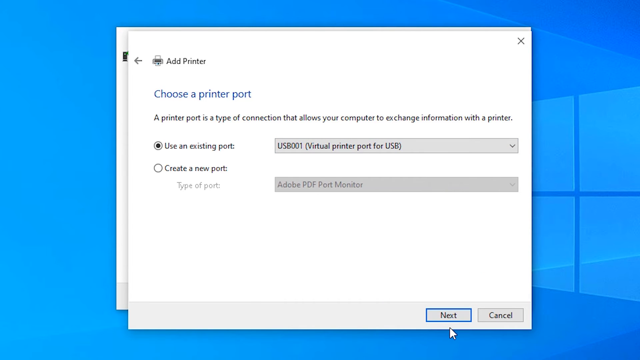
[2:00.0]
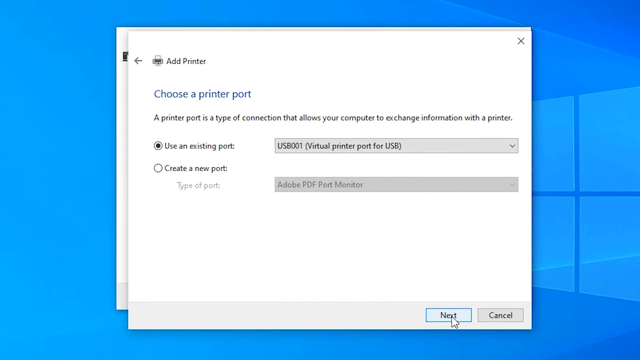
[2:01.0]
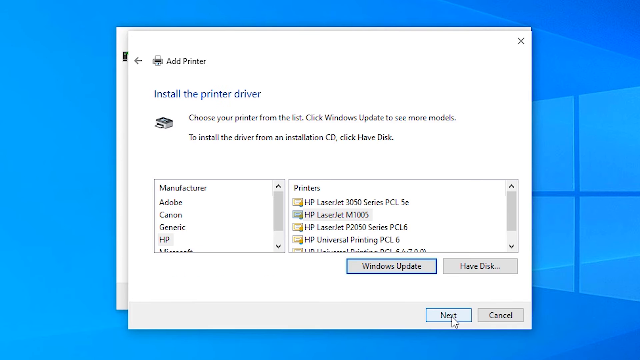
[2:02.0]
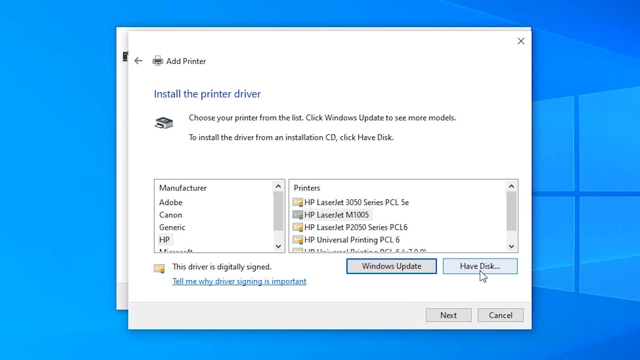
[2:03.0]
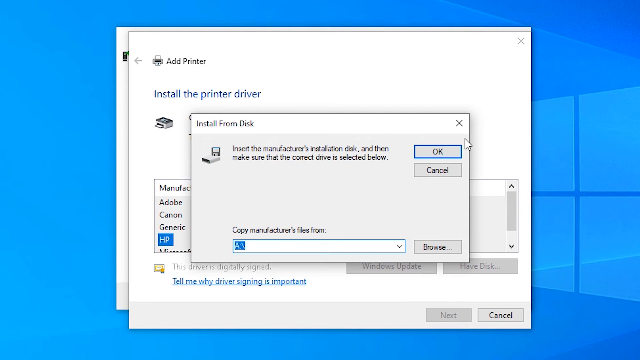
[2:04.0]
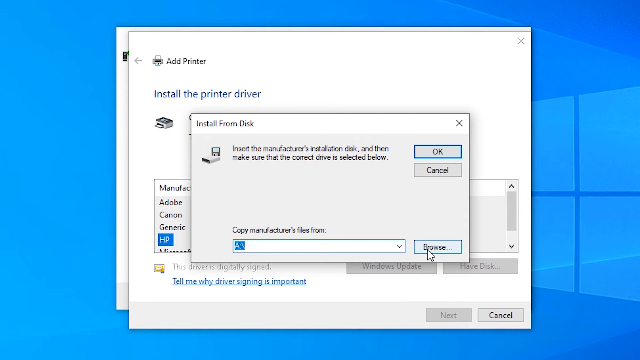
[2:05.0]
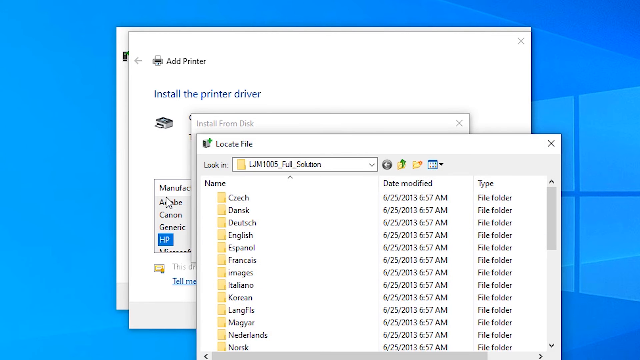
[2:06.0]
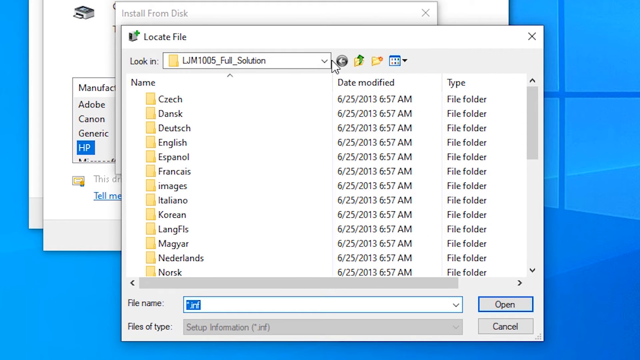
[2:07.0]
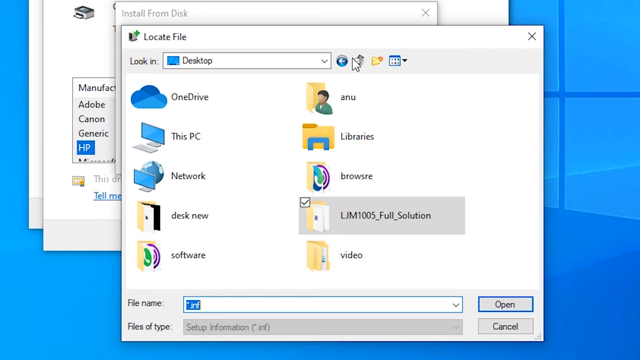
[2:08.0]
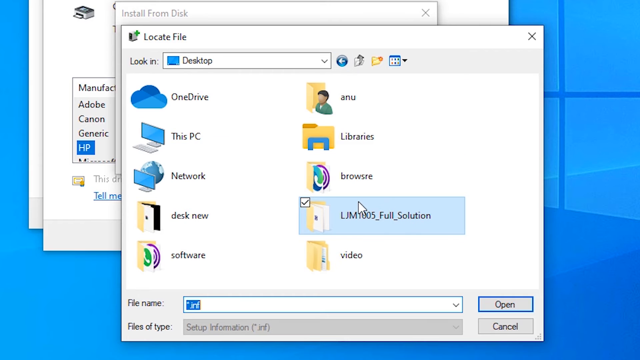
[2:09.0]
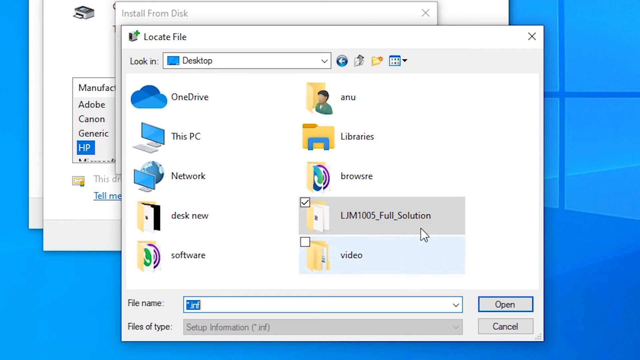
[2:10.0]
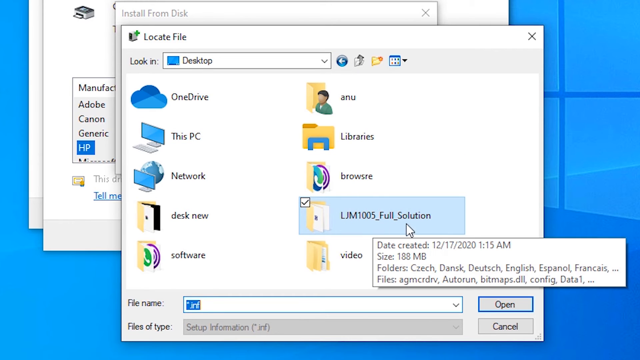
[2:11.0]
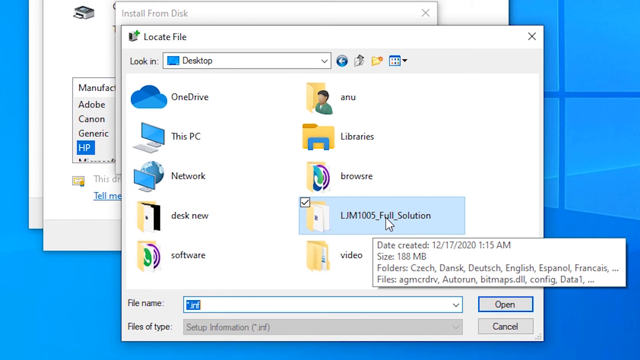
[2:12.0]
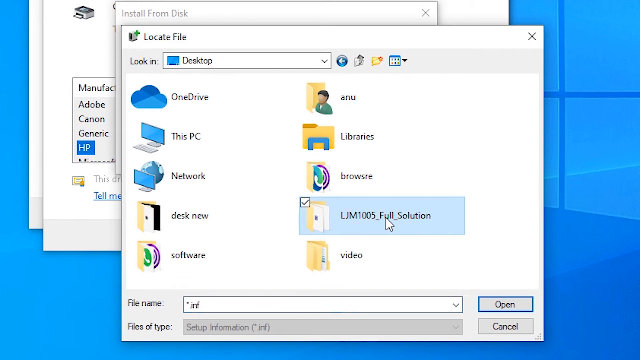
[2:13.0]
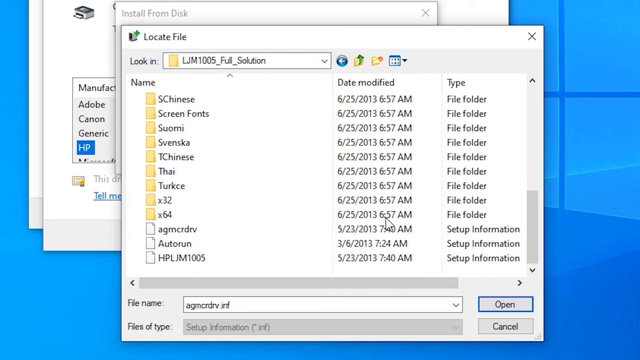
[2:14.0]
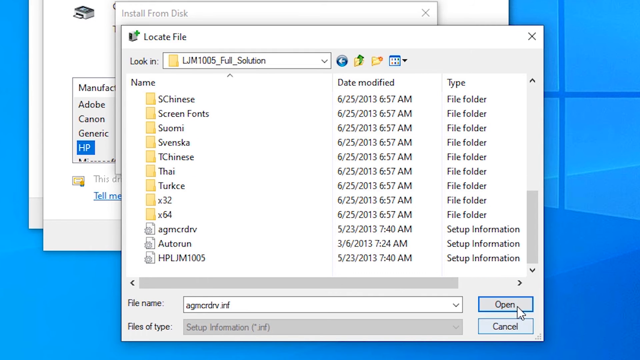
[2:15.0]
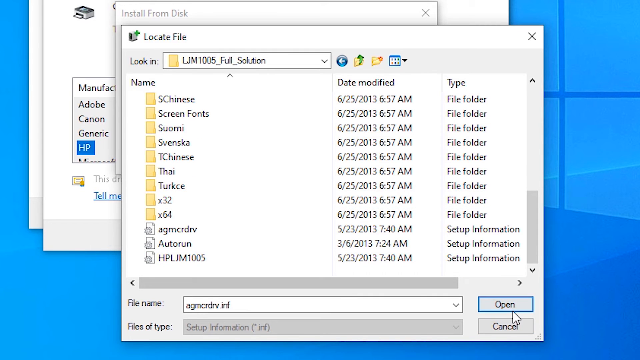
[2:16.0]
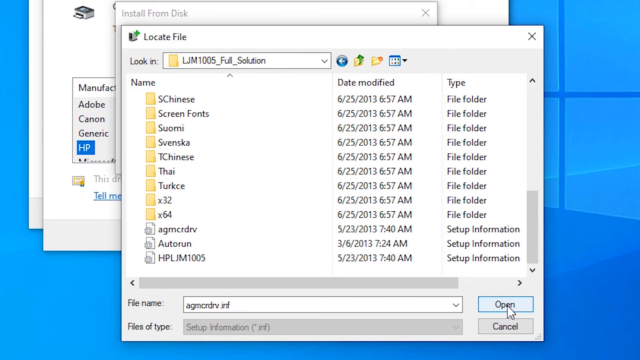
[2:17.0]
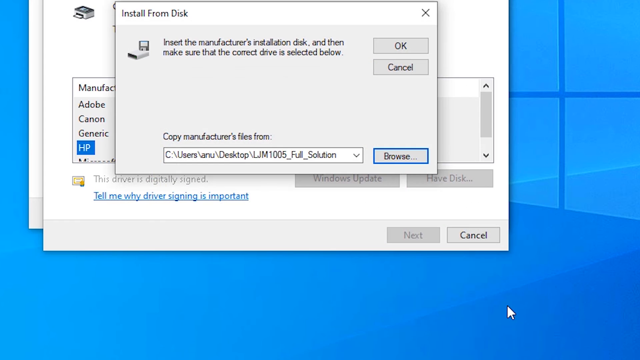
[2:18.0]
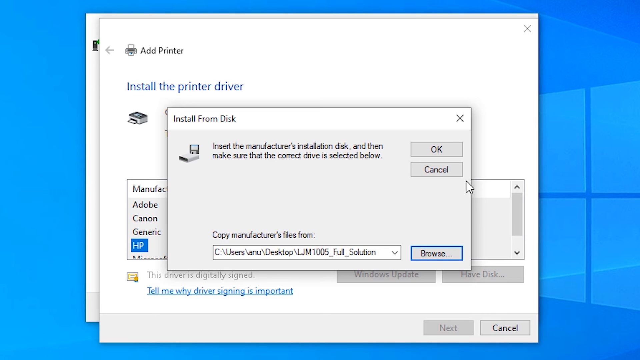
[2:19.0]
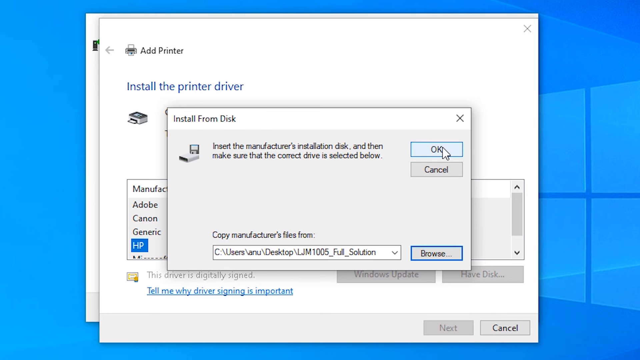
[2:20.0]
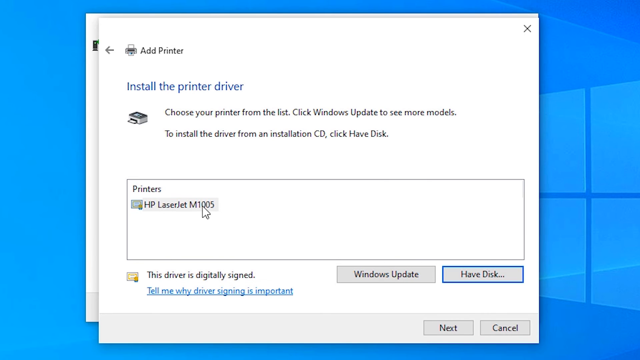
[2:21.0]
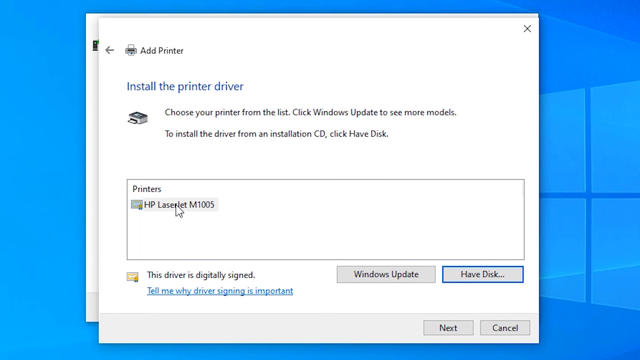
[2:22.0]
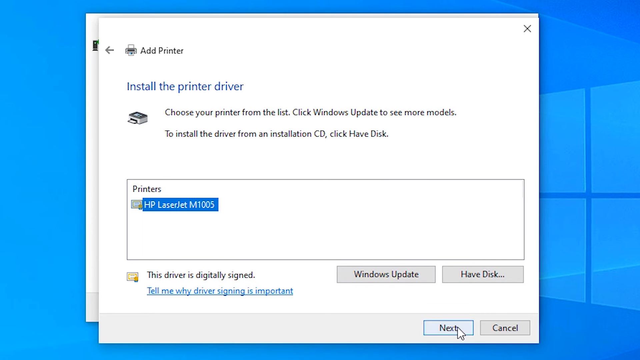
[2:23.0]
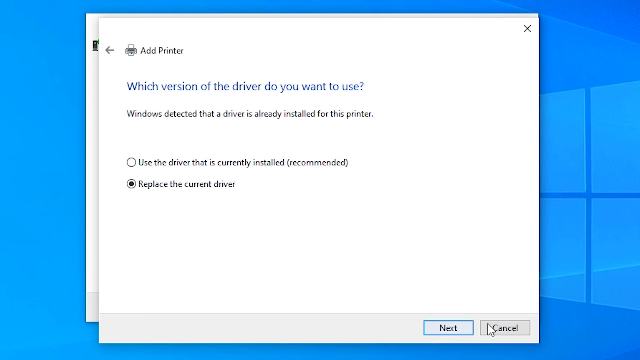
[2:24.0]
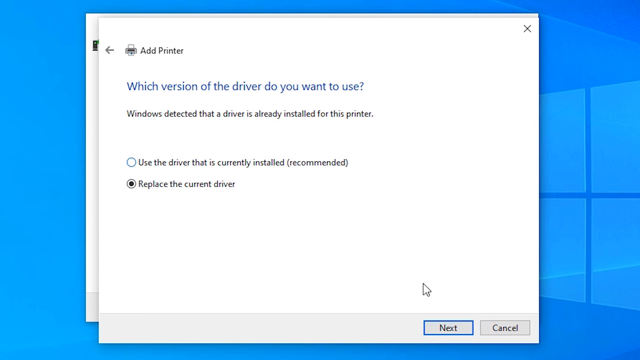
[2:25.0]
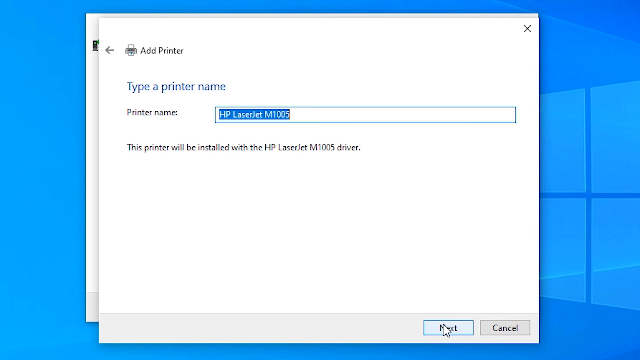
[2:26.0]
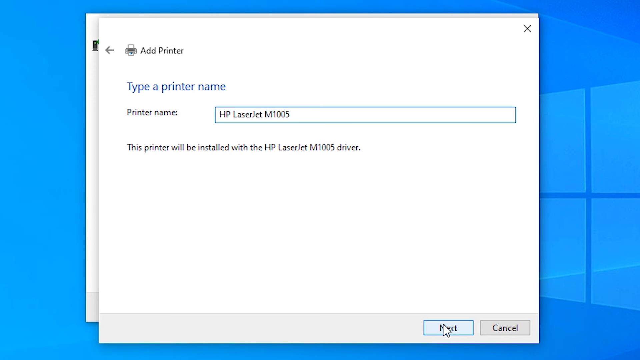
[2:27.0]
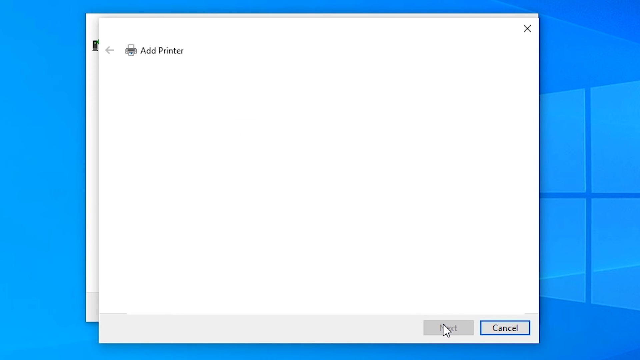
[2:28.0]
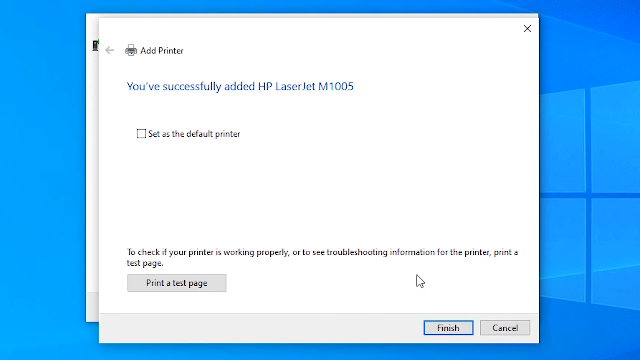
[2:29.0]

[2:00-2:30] The video, a little wider than it is tall, shows a light blue desktop background with a Windows icon in an even lighter blue peeking out on the right from behind the overlaid window. The main window in the center says "add a printer" at the top and, below that, "choose a printer port", with the first of two options selected. Next is clicked, leading to a page that says "install the printer driver" at the top. Have disk, in the lower right just above the cancel button, is clicked, then browse in the window that pops up. On the locate file screen, the back-up-one-level button is clicked, and then a folder called "ljm1005 full solution" is chosen; the mouse wiggles over it to emphasize it. The cursor then arrows down in the locate file menu that pops up and okay is clicked. An install from disk menu pops up, and okay is clicked on it.